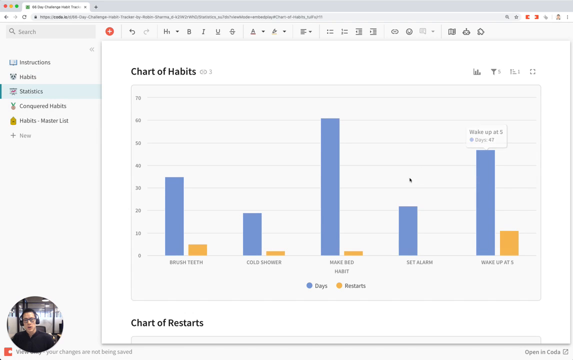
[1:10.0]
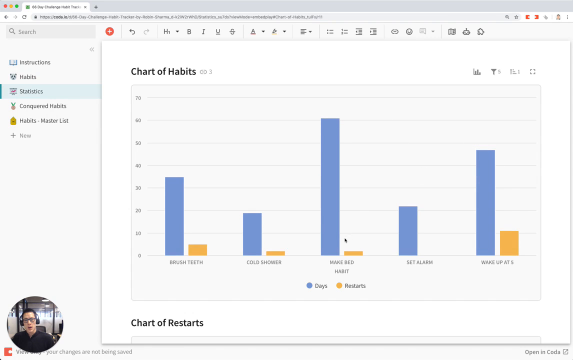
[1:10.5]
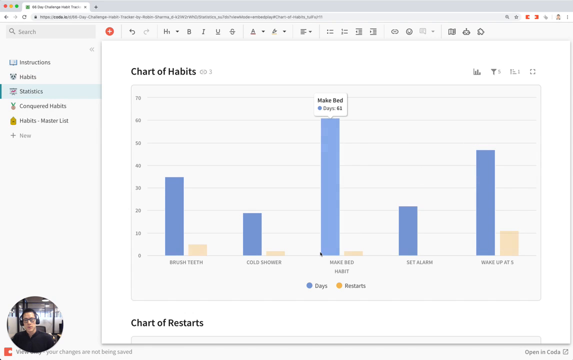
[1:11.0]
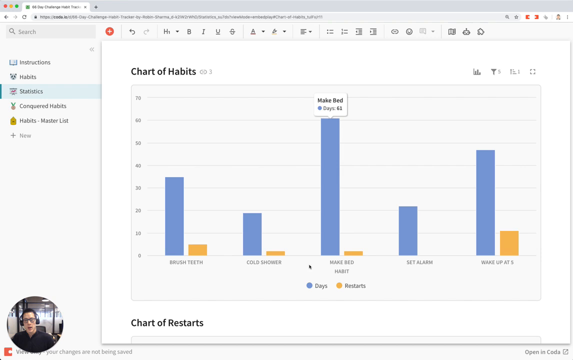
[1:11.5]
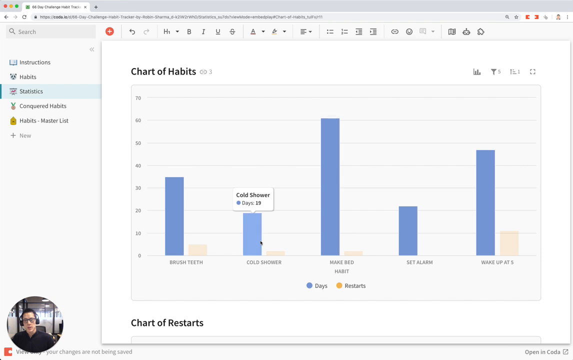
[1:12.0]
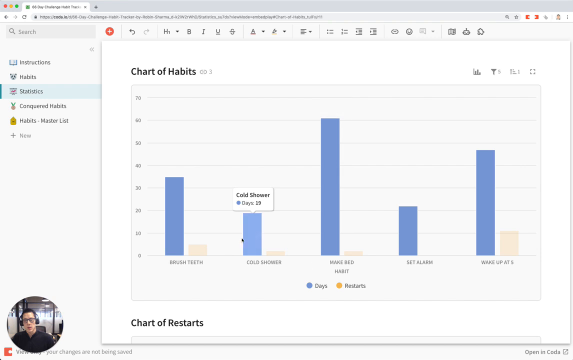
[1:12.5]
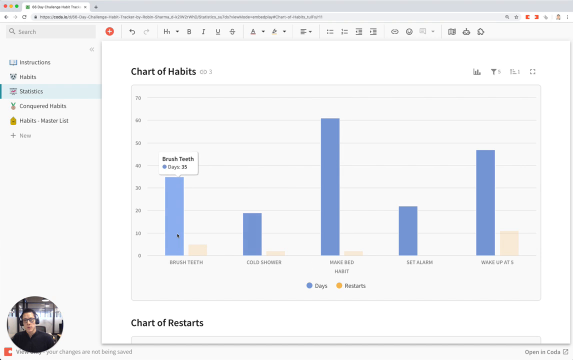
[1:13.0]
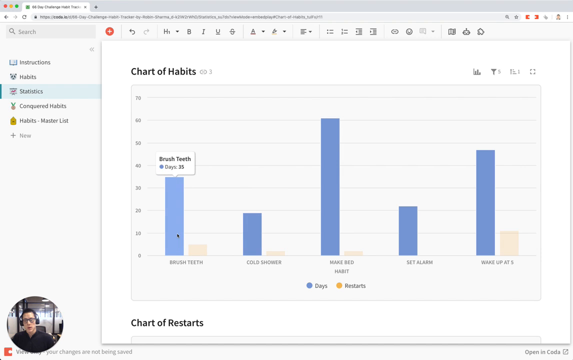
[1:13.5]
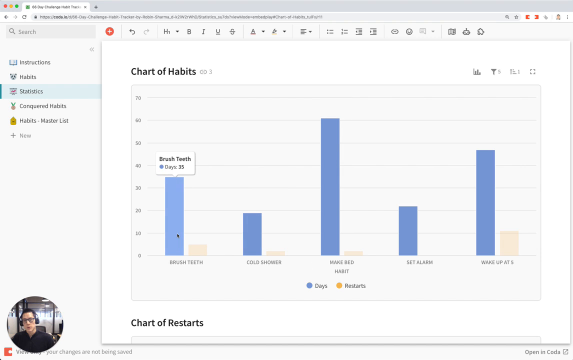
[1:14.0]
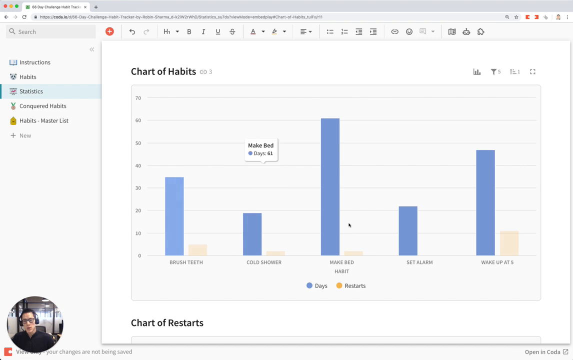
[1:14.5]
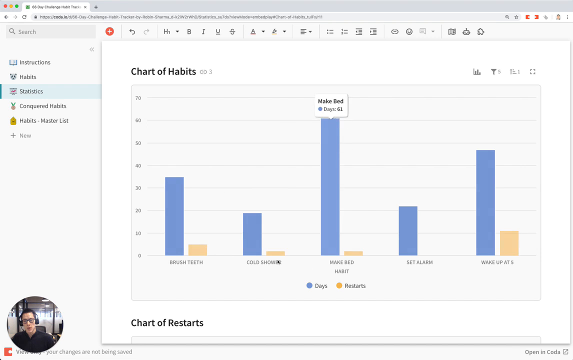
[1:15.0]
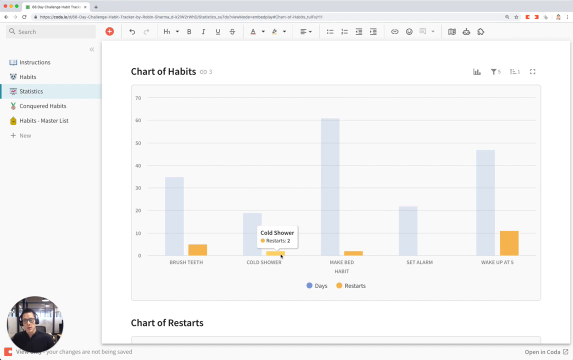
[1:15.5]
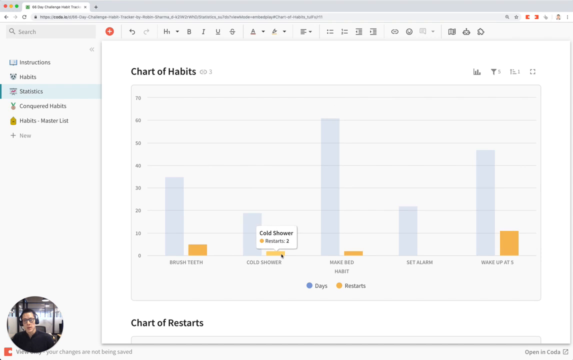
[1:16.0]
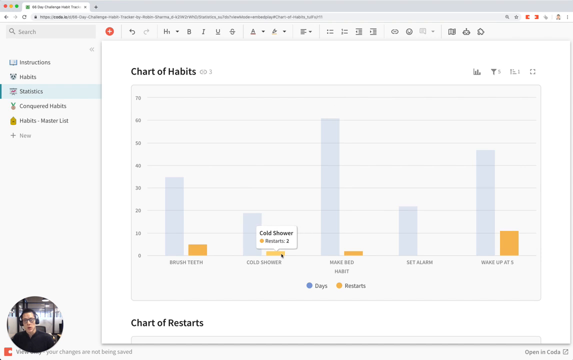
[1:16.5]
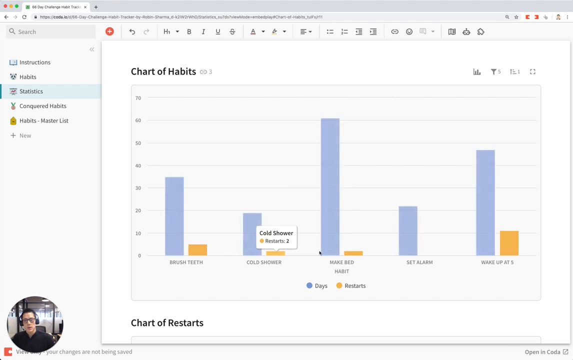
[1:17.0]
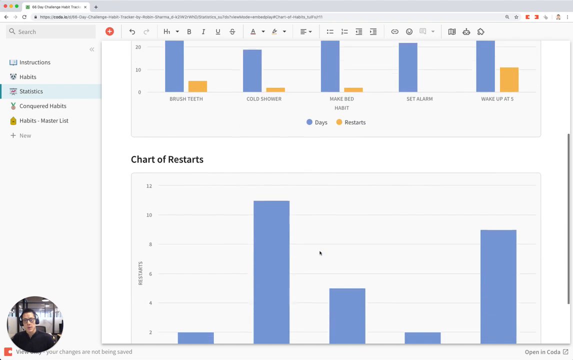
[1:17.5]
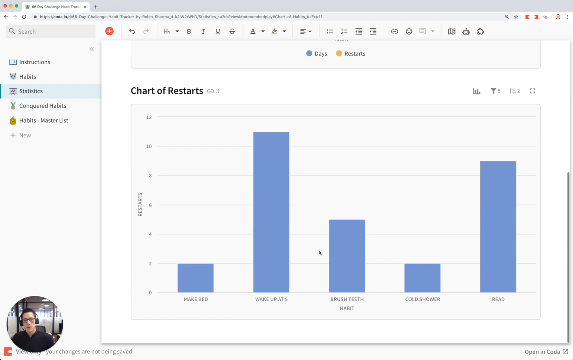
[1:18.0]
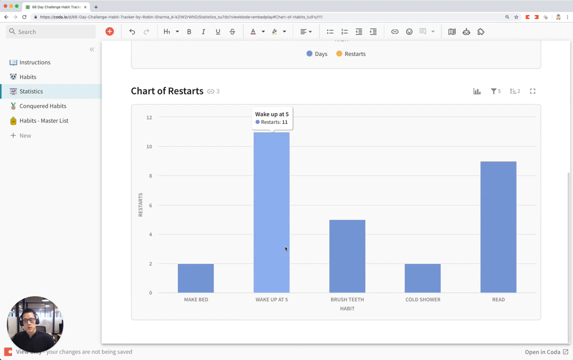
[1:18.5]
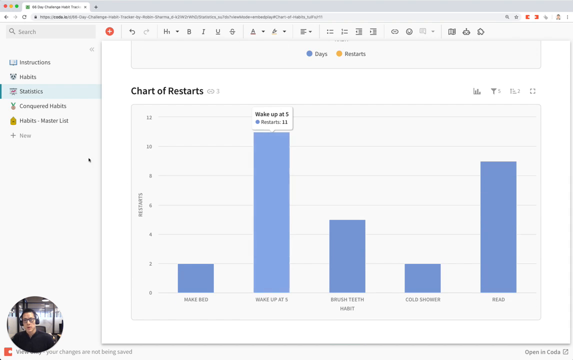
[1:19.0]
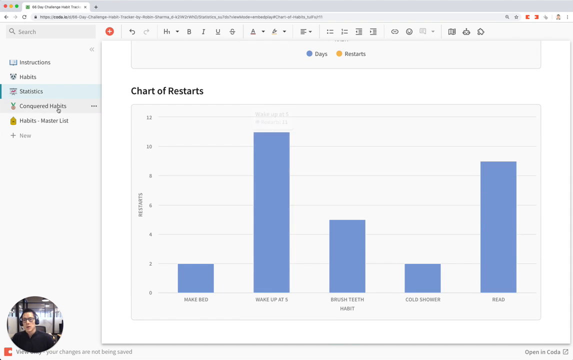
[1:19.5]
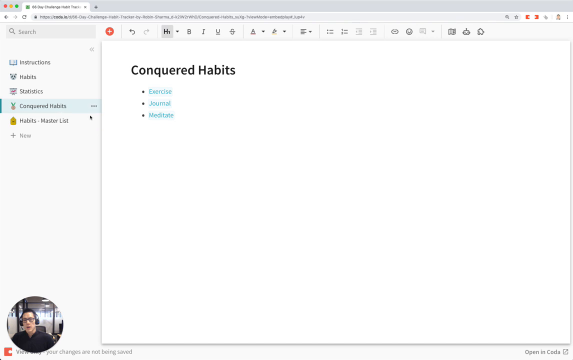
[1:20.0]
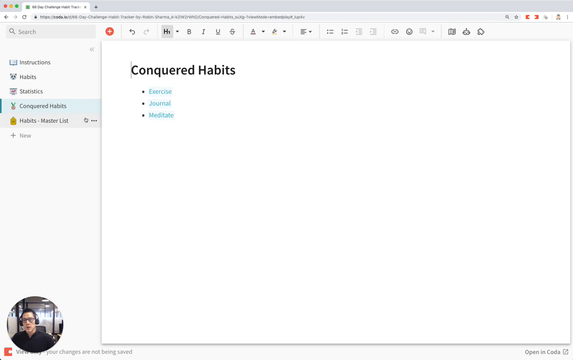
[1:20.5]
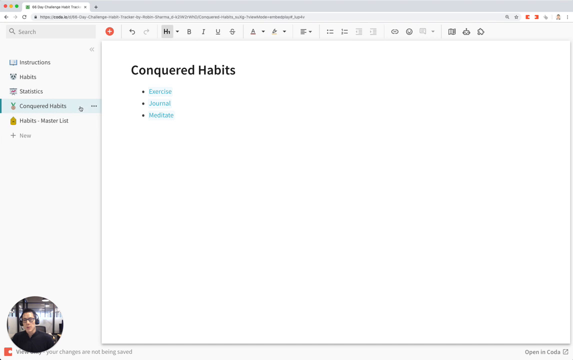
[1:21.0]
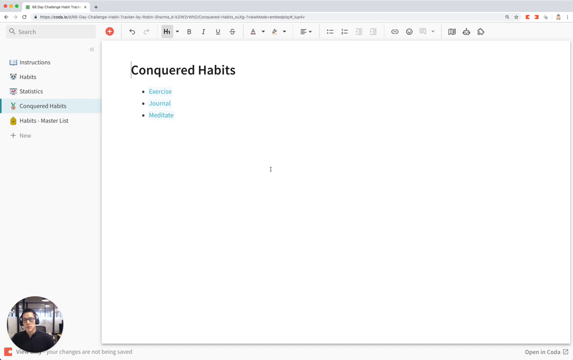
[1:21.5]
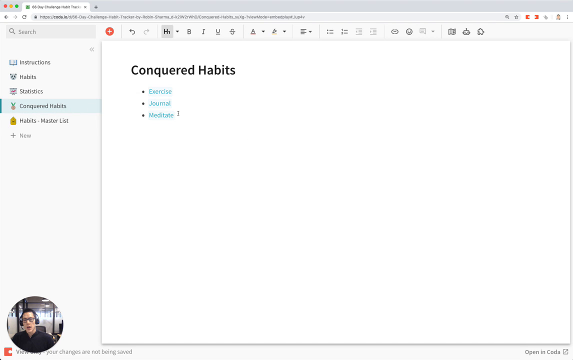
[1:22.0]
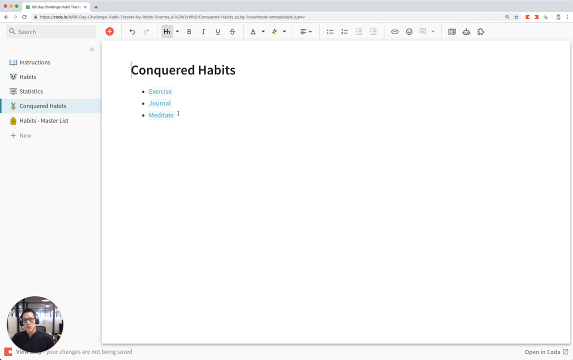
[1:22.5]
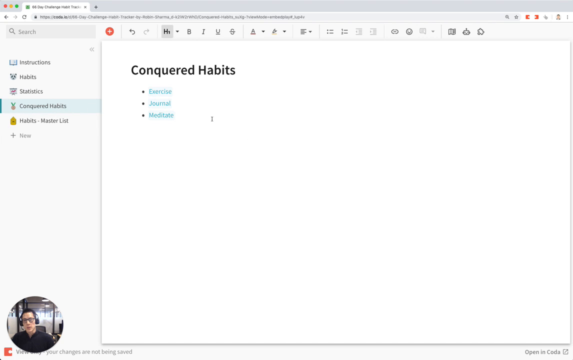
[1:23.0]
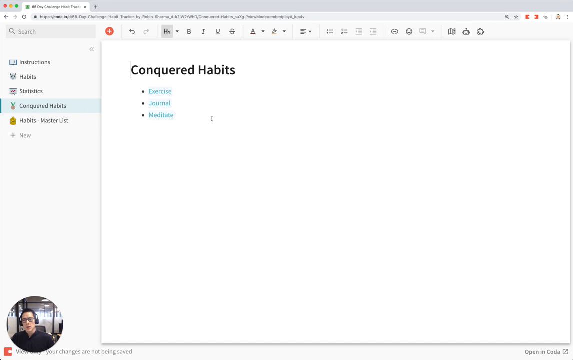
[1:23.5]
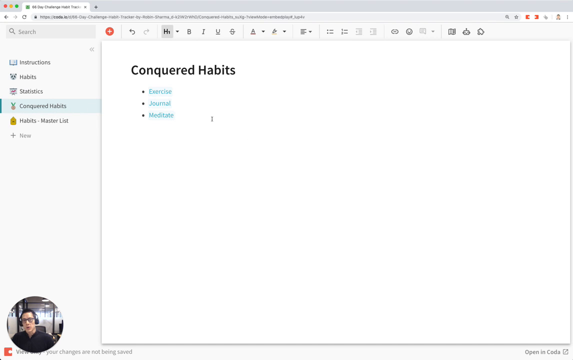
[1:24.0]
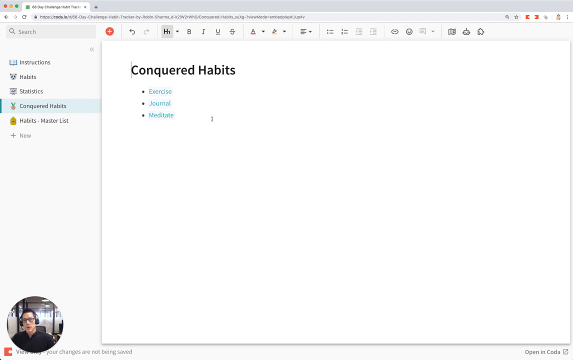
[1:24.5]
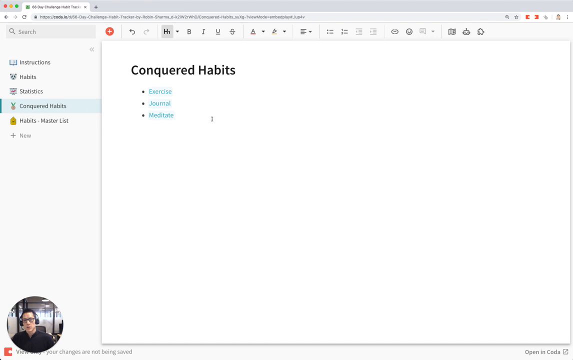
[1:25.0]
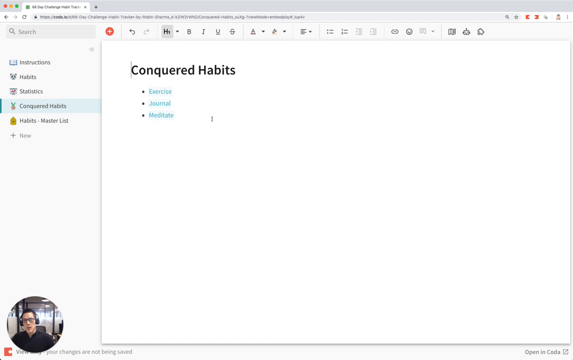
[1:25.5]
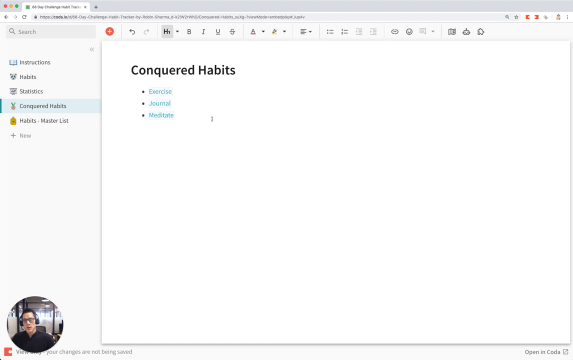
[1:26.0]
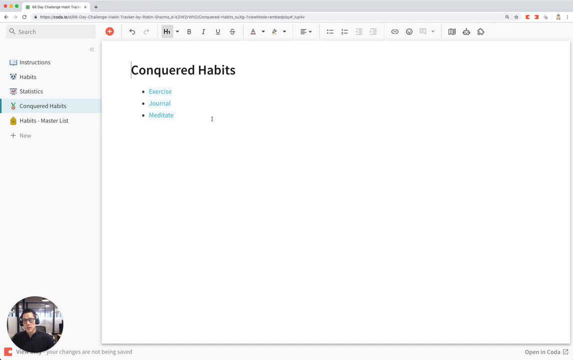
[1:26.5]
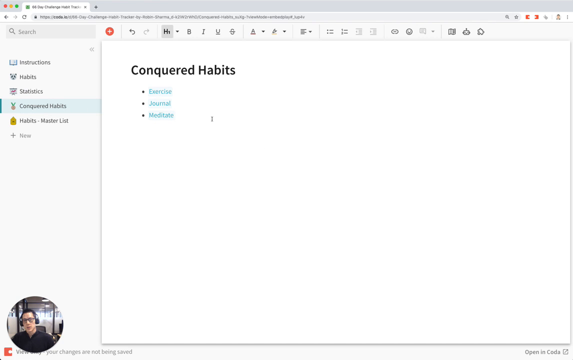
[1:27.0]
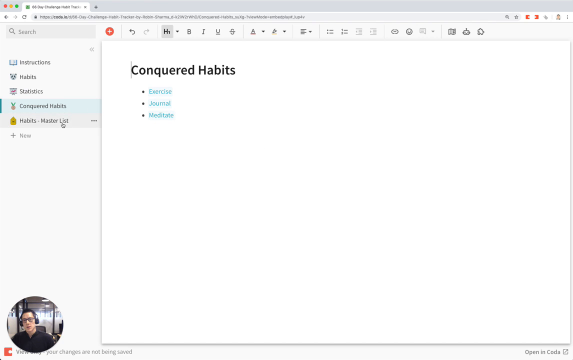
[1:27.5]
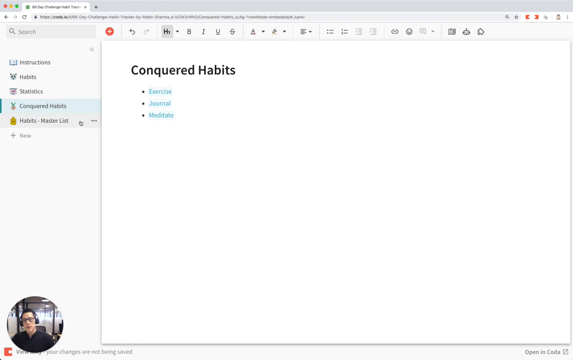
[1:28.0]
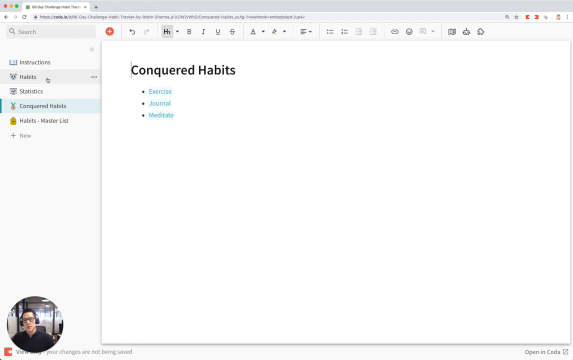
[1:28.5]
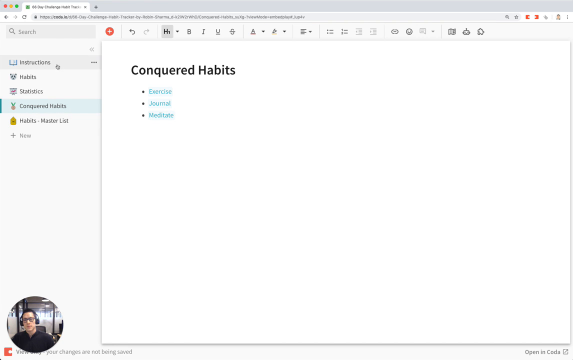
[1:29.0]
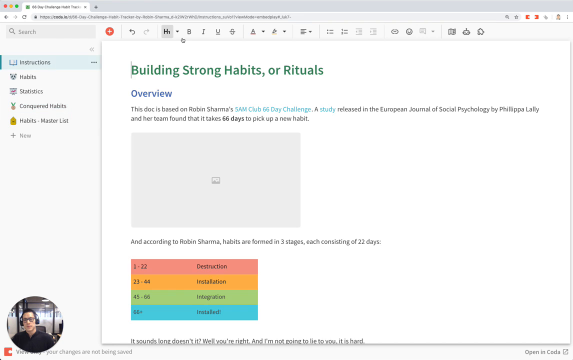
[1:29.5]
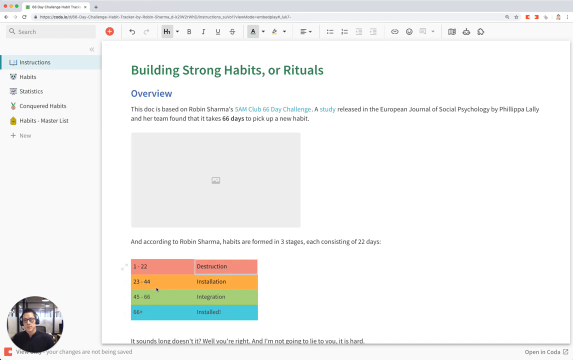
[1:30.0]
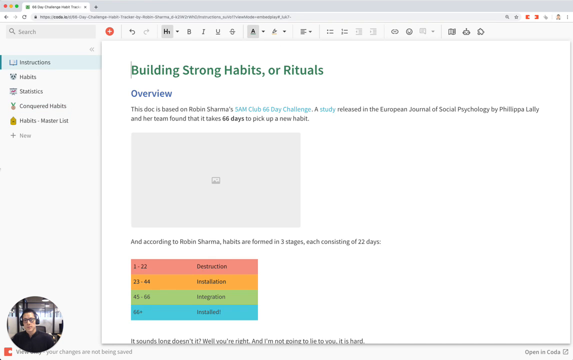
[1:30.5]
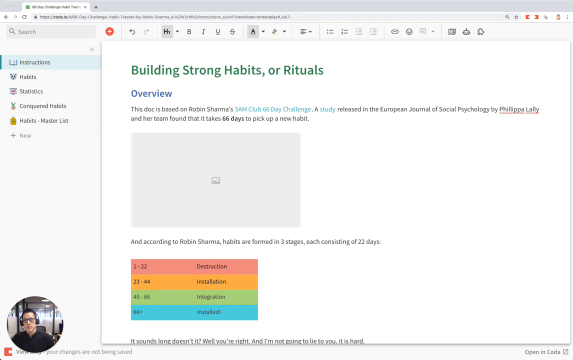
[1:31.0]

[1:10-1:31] The man goes through the graphs, moving from the bottom left to the bottom right, and then to the conquered habits tab on the left-hand side of the screen, which is in bold black text. In the upper left of the page there is something like a title, and below it a bullet point list with very bold black bullet points, each item a link in blue text, such as exercises, journals and meditate. He then goes back to the top left to instructions, which looks like a screen with an overview of the purpose of the document. The instructions say the "doc is based on Robin Sharma's" 66 day challenge and on the European Journal of Social Psychology by Philippa Lally and her team, "that it takes 66 days to pick up a new habit".